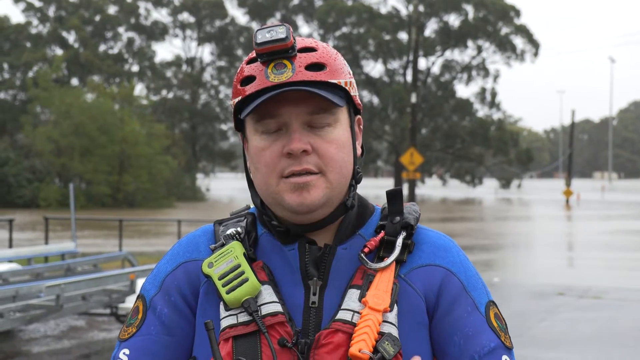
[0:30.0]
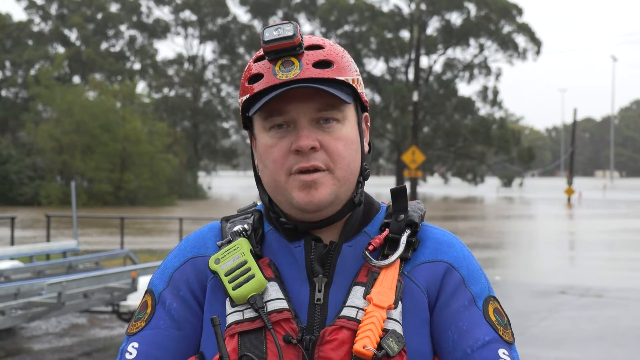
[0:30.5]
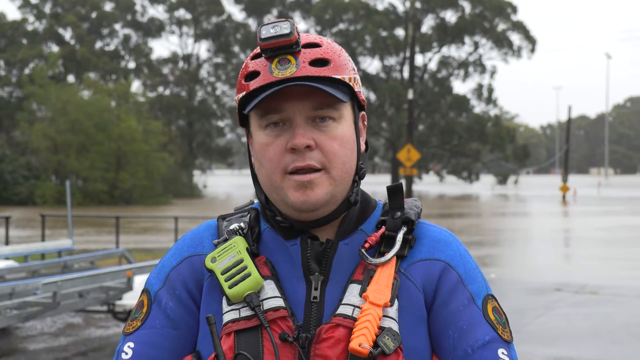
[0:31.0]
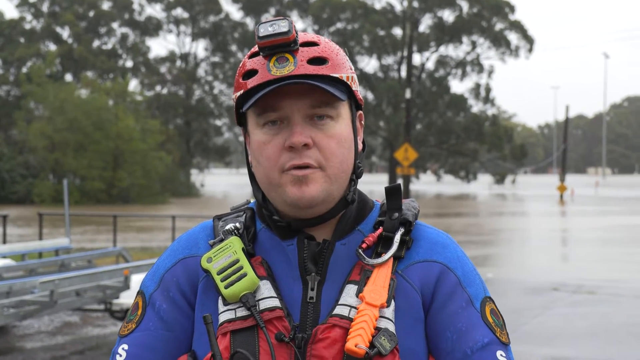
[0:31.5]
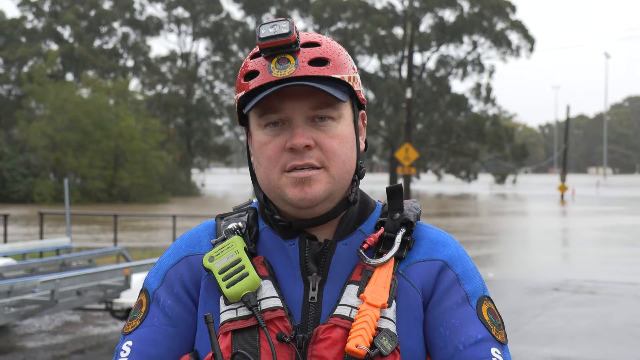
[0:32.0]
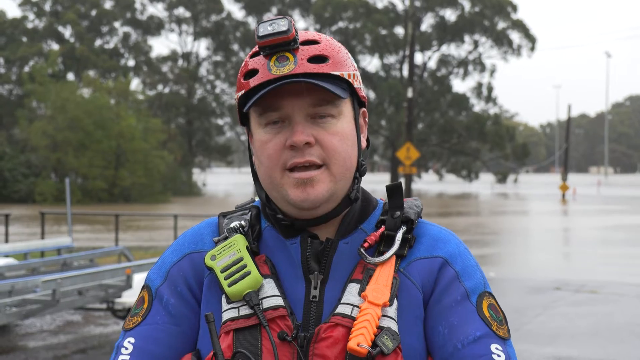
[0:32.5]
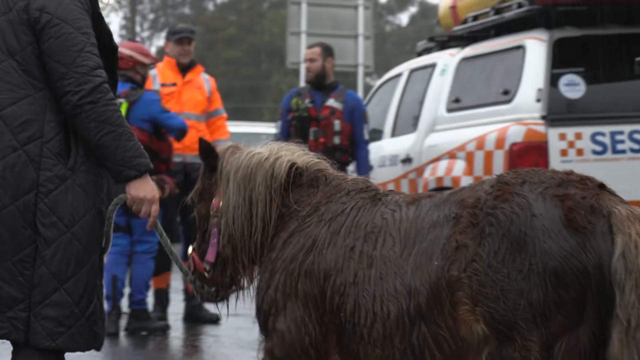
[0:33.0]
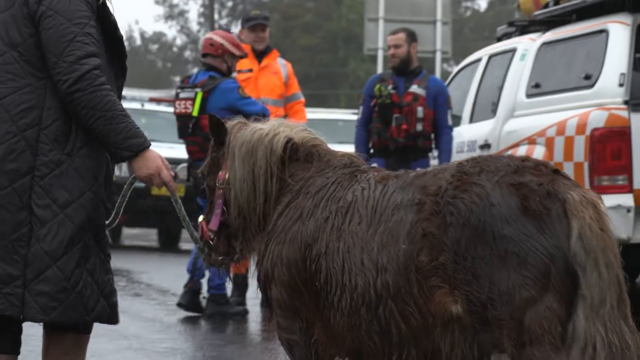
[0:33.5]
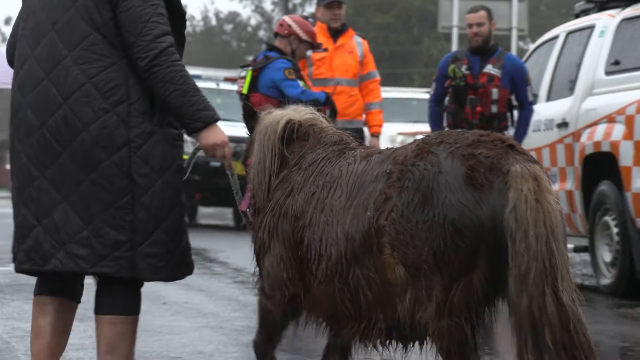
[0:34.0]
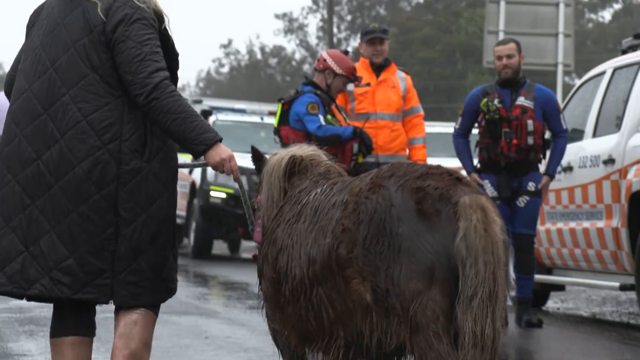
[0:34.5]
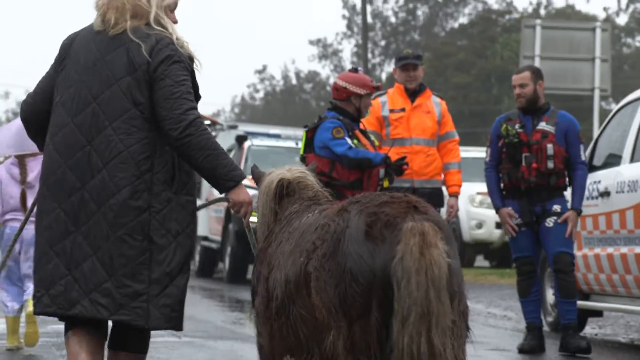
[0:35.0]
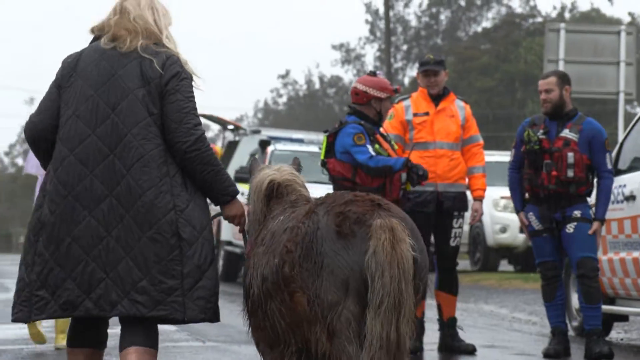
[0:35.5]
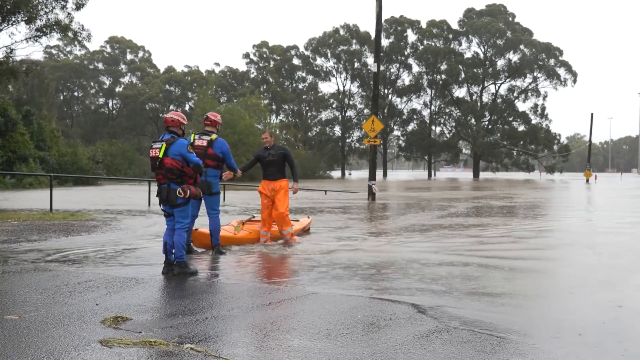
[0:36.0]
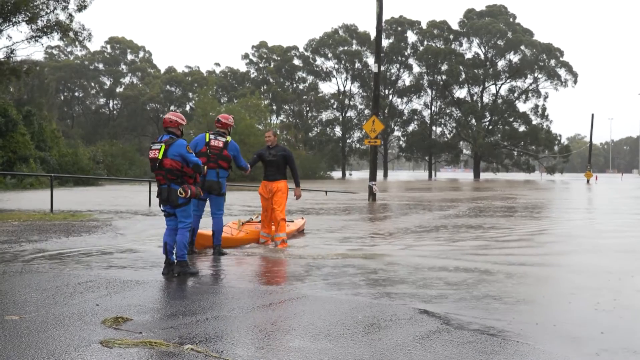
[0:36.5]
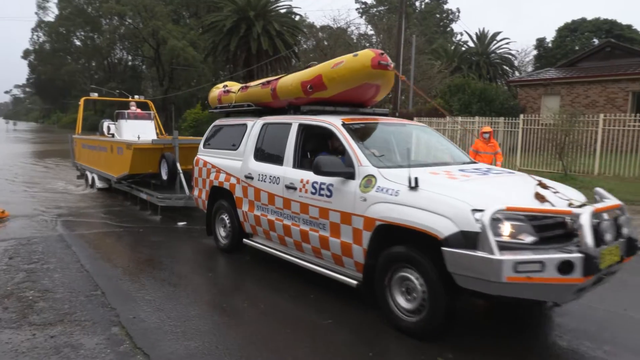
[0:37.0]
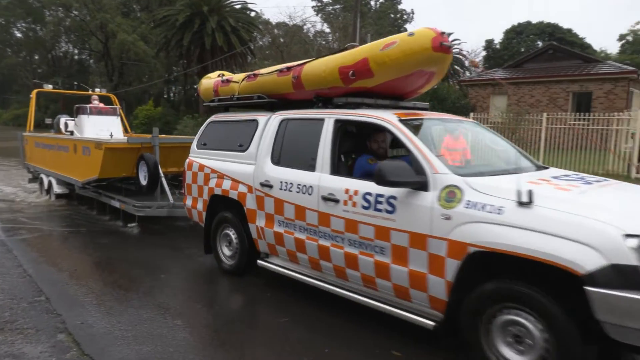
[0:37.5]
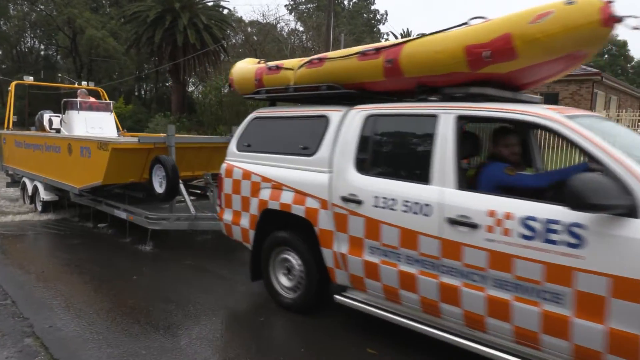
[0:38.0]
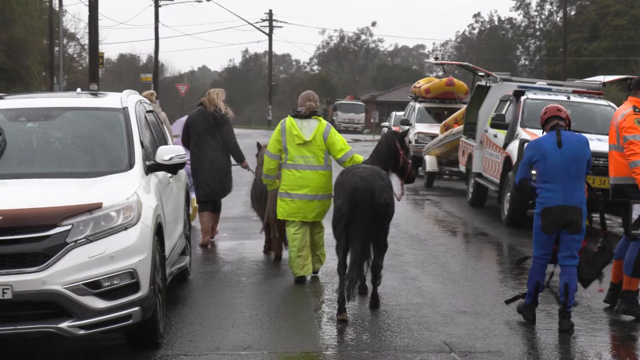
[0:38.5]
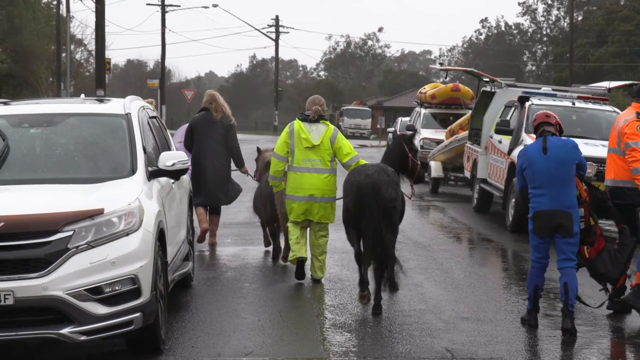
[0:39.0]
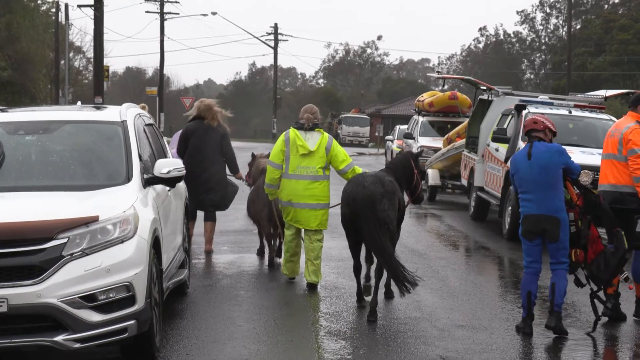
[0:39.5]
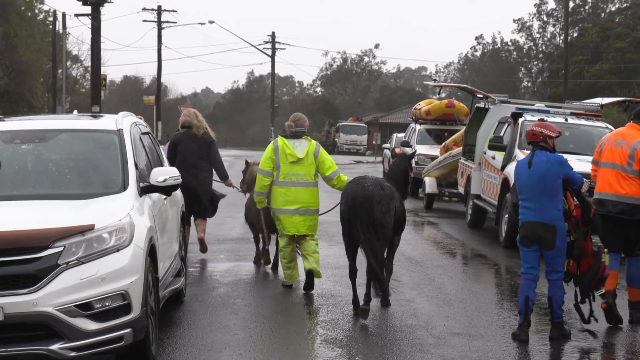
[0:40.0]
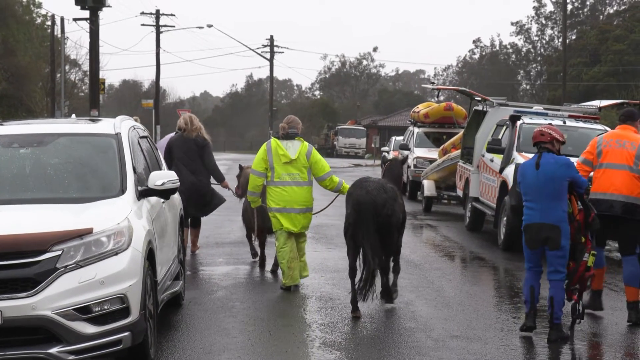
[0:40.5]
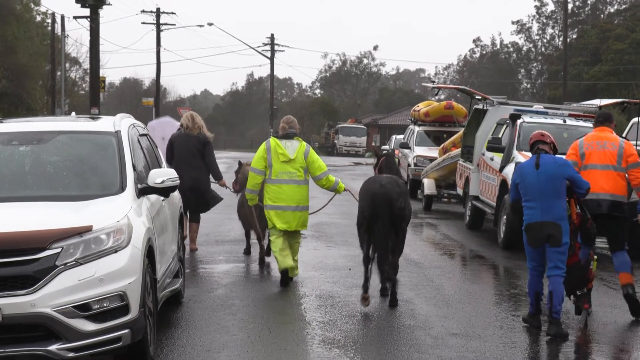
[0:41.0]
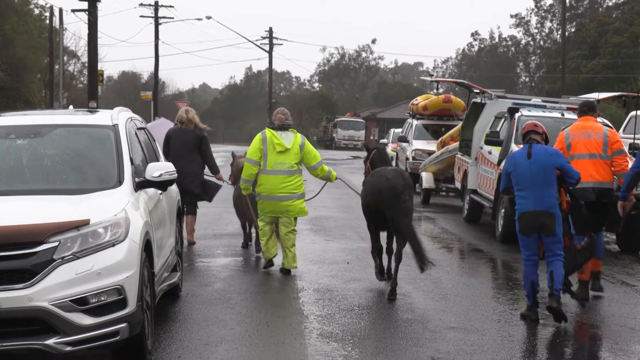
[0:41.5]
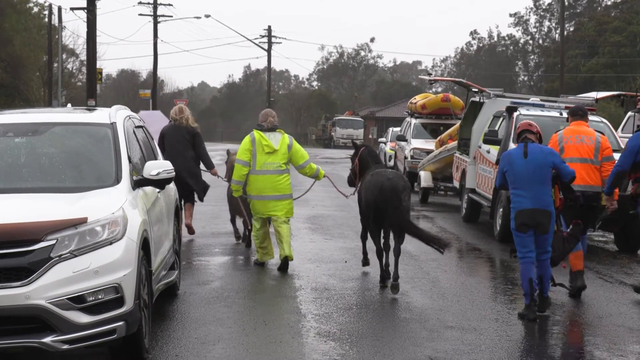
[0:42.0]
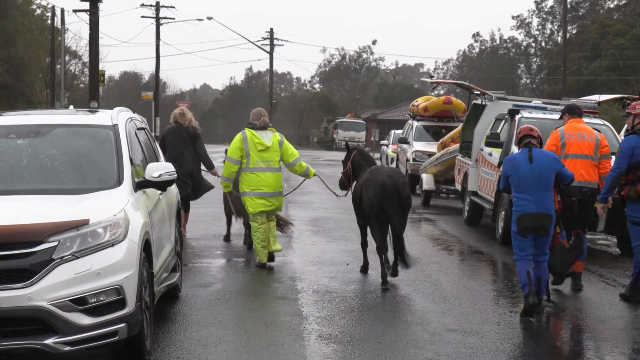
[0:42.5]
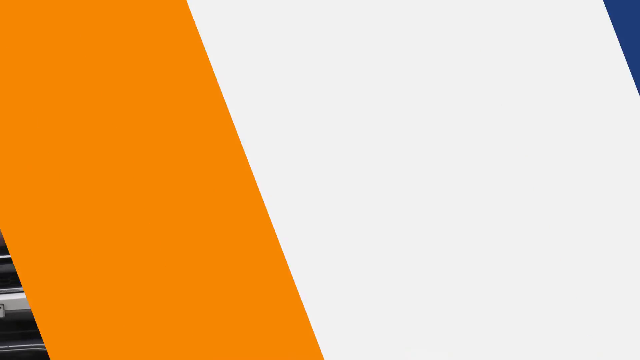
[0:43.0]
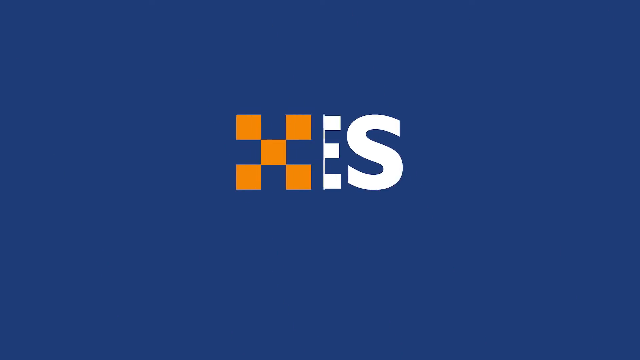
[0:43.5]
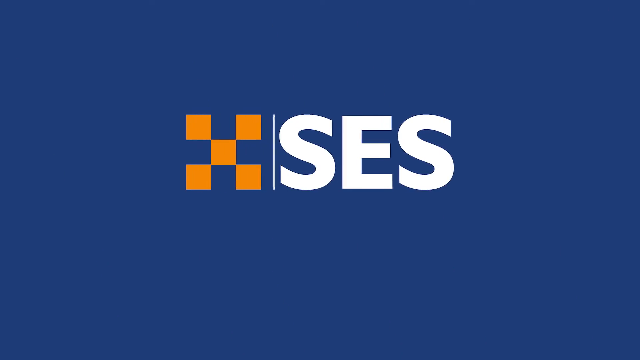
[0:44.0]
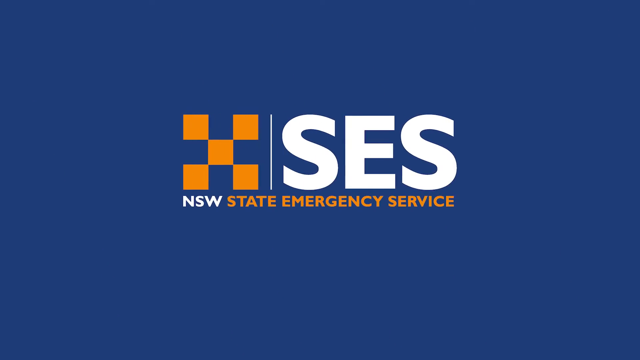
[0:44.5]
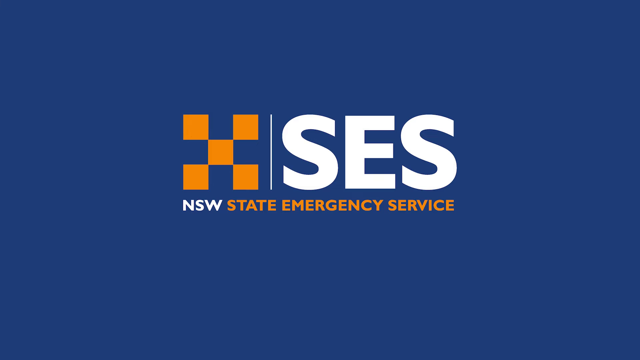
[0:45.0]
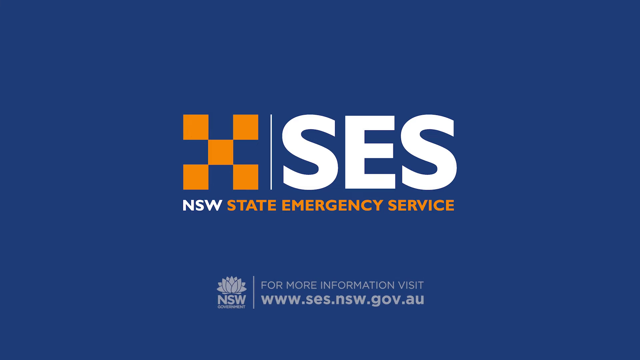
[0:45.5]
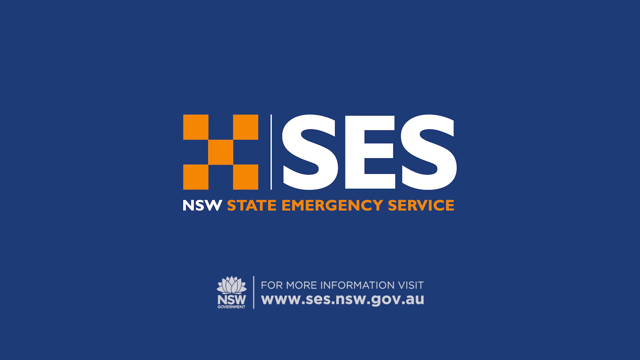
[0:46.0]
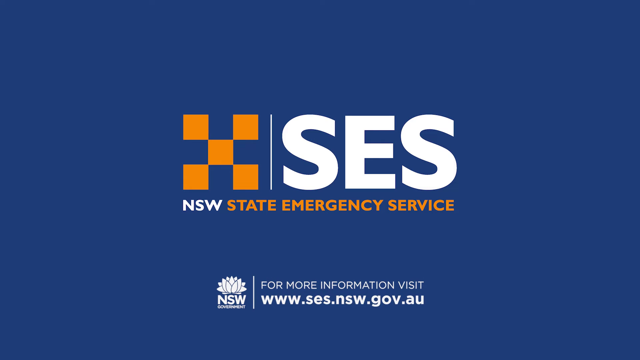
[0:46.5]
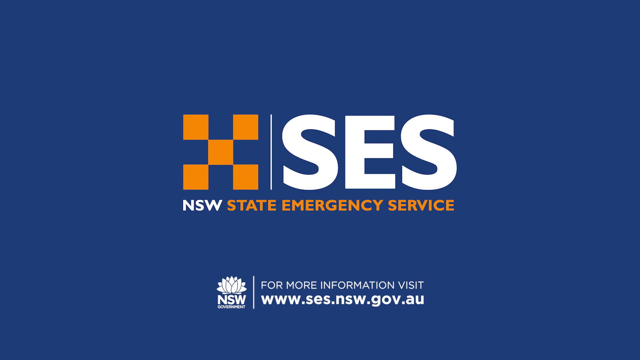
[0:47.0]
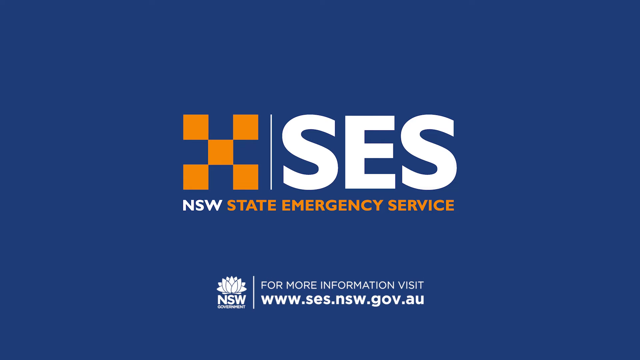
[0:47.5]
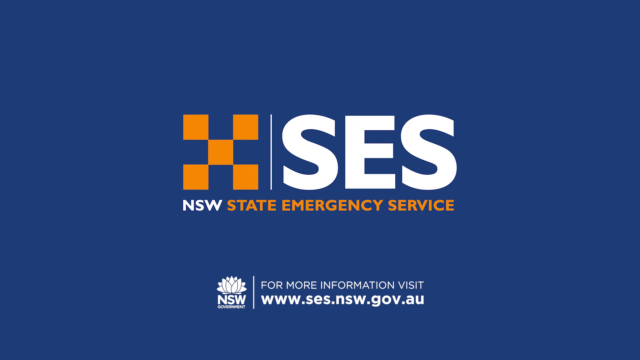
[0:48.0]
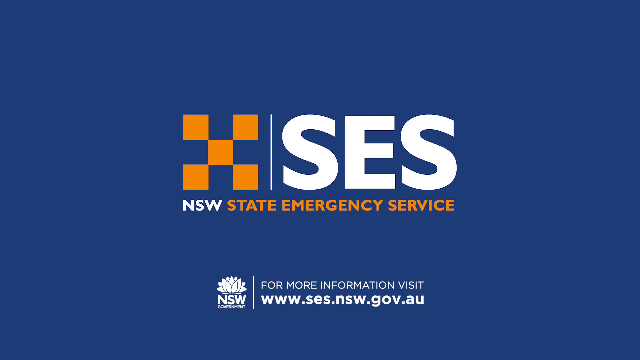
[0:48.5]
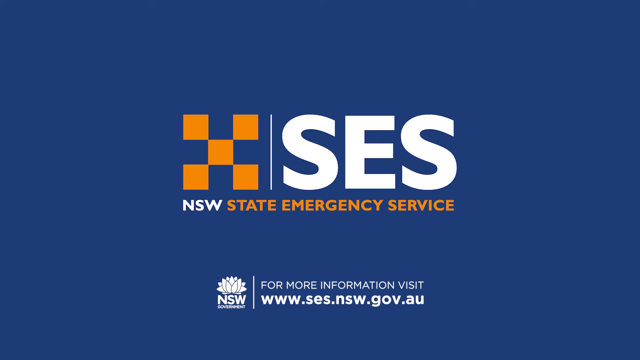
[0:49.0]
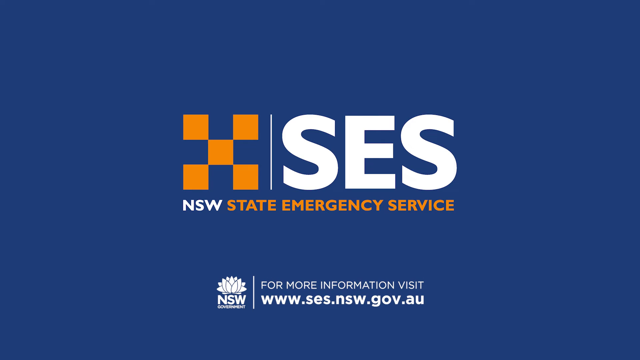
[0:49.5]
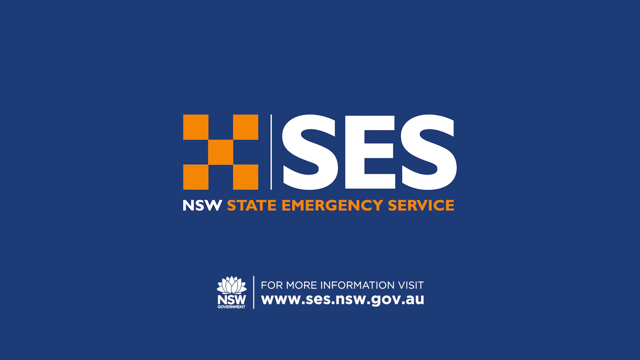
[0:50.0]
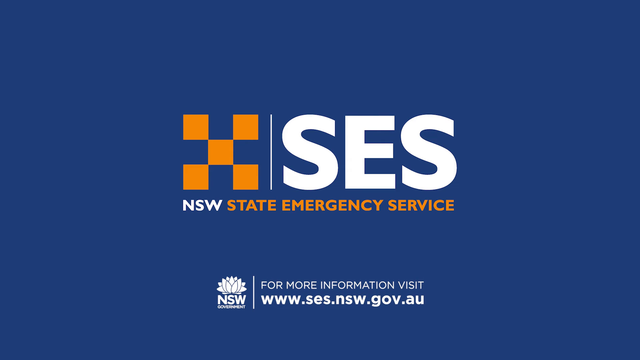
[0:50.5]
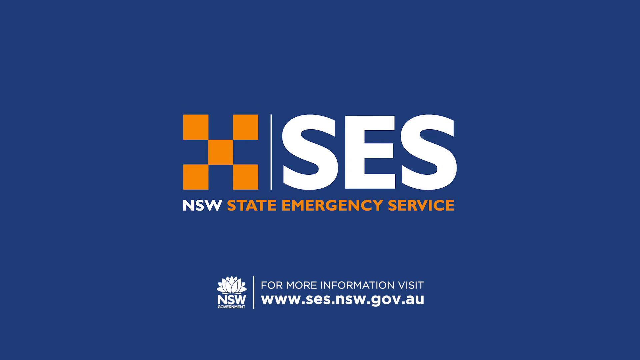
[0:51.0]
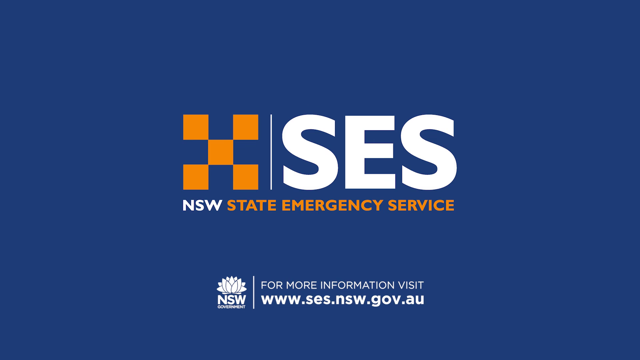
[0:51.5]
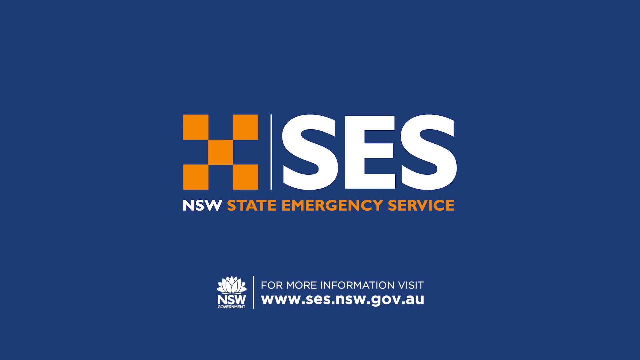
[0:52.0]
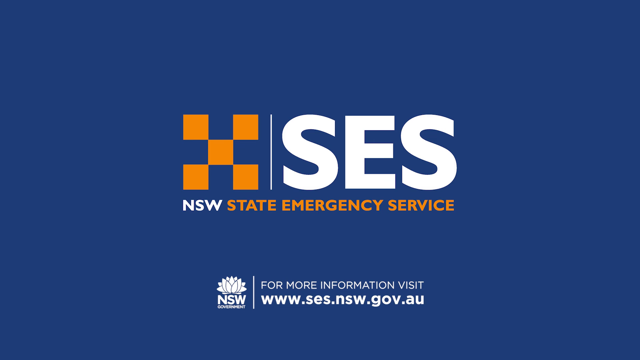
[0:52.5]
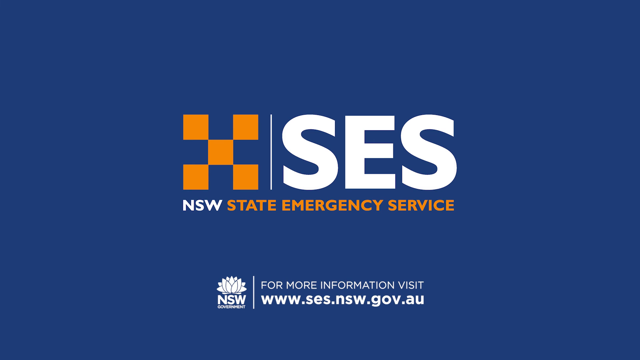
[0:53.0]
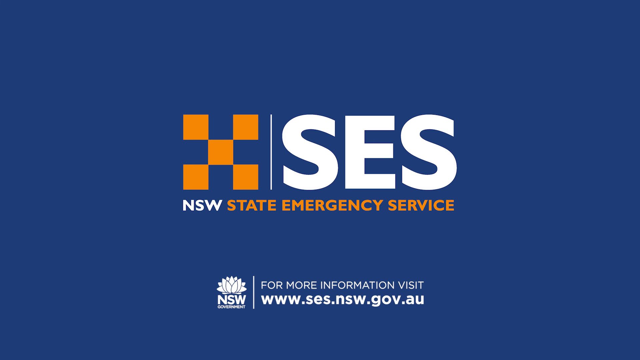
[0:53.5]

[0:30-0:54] More of the interview with the man in the safety gear is shown. Following the impacted area, other vehicles are being moved; there appear to be SES response vehicles and some canoes, suggesting part of a much wider operation. The horses are led away. An info card follows, reading "SES" and "NSW", "State Emergency Services", with a small logo and the text "for more information, visit www.ses.nsw.gov.au". The SES logo seems to appear on all the people's gear, so they all seem to be part of the same organisation.